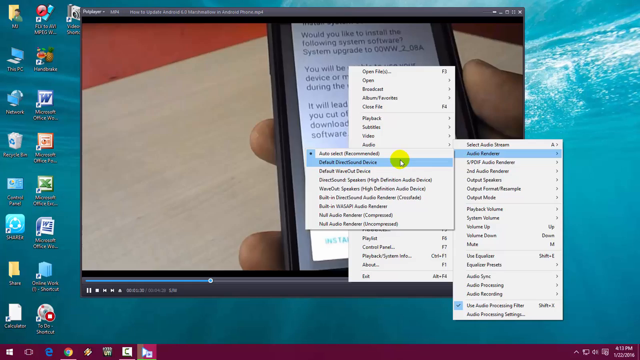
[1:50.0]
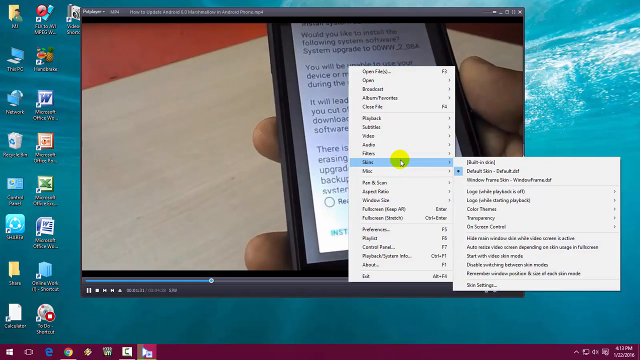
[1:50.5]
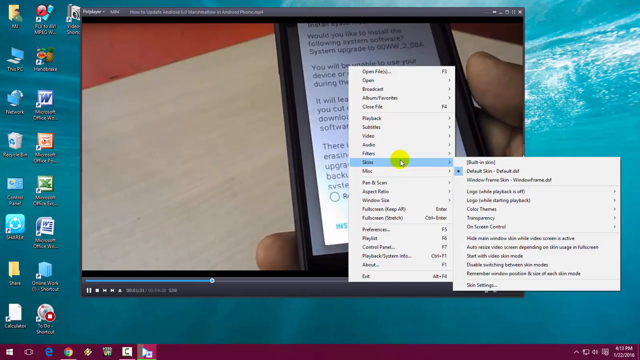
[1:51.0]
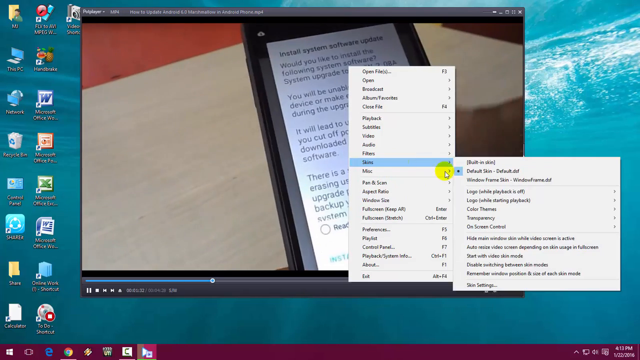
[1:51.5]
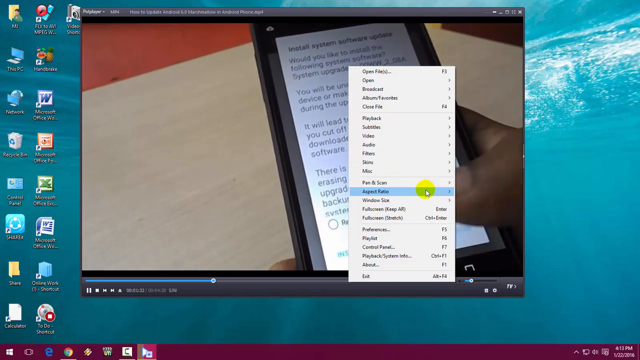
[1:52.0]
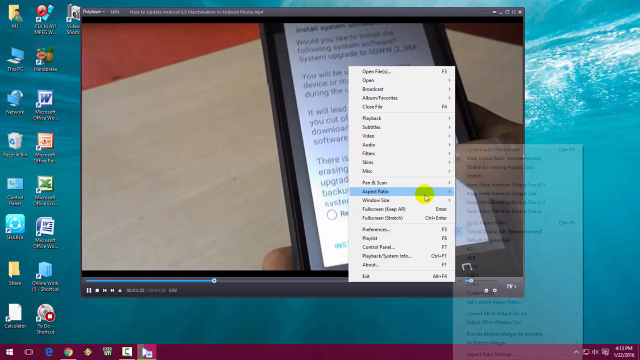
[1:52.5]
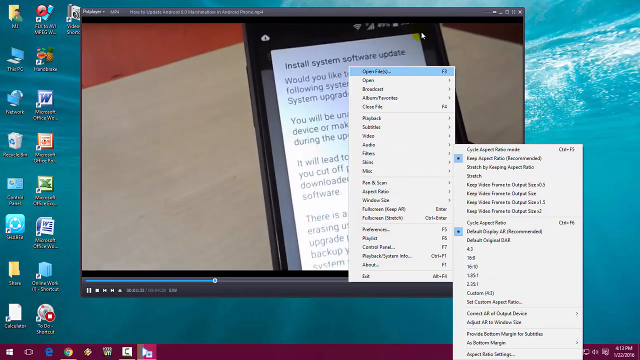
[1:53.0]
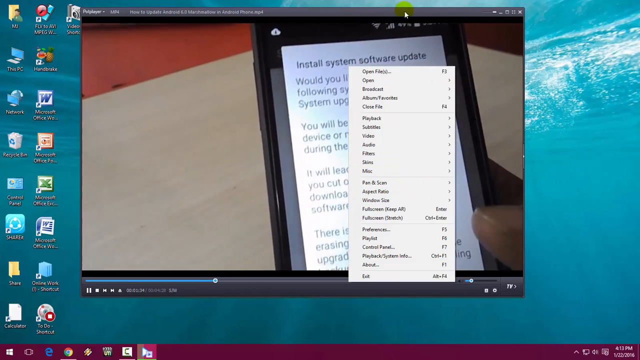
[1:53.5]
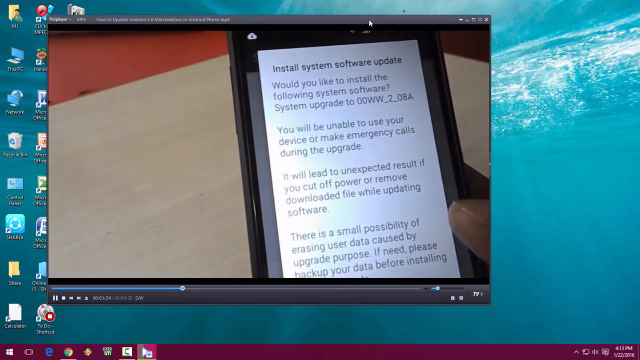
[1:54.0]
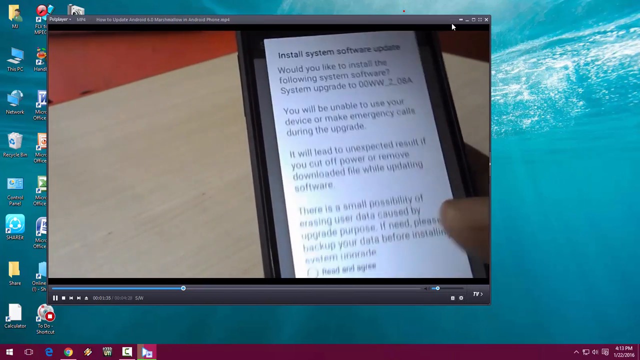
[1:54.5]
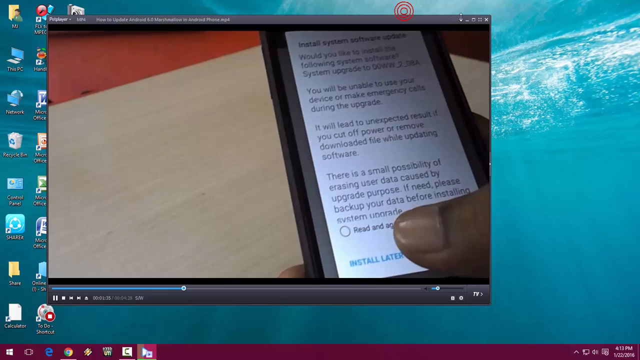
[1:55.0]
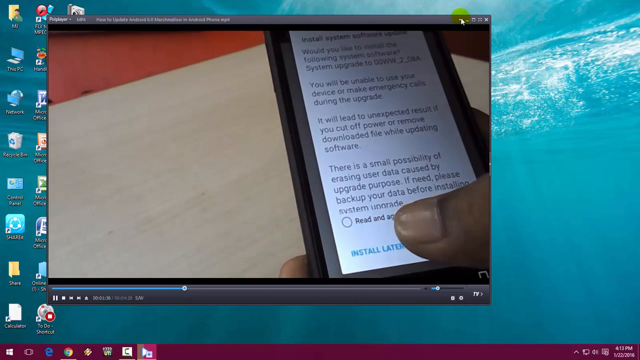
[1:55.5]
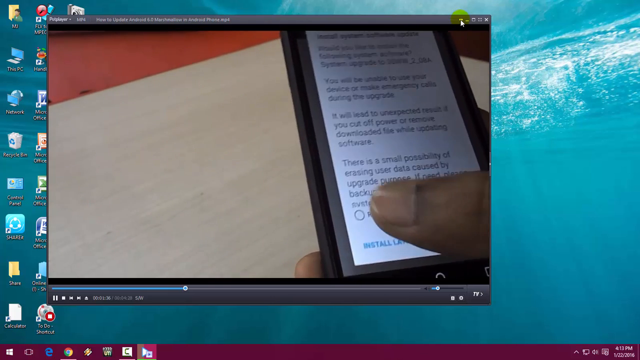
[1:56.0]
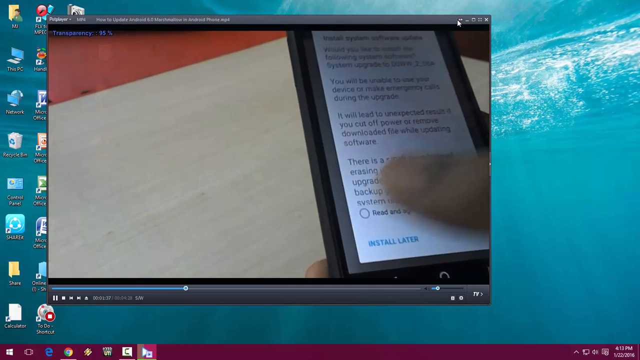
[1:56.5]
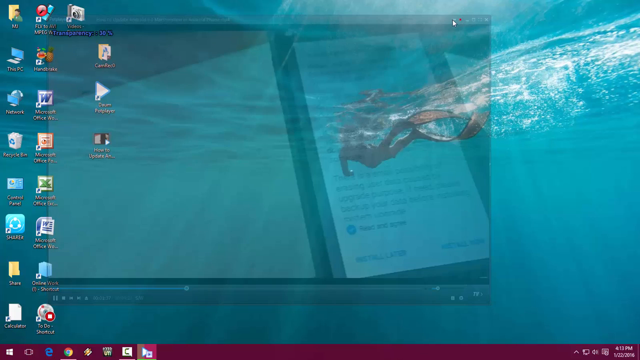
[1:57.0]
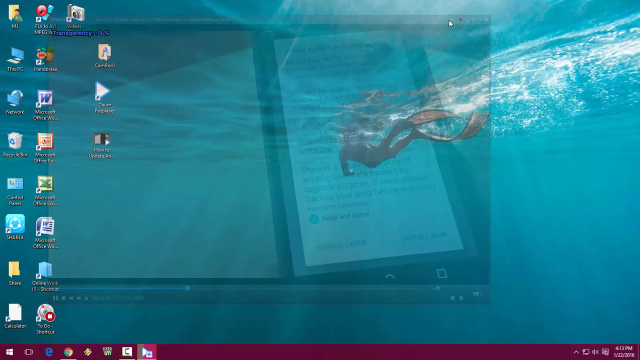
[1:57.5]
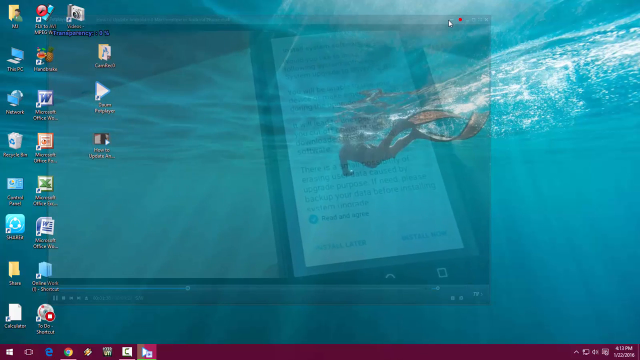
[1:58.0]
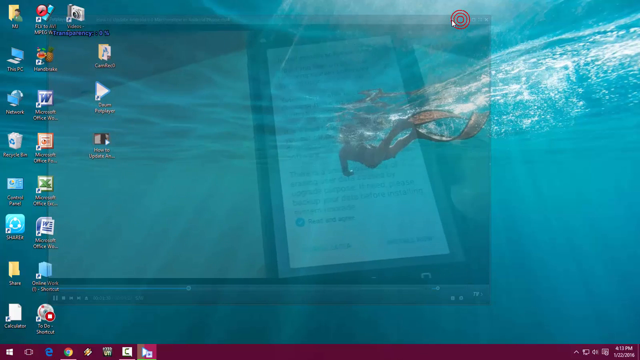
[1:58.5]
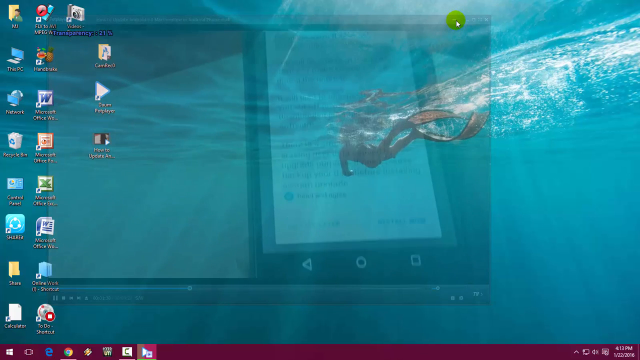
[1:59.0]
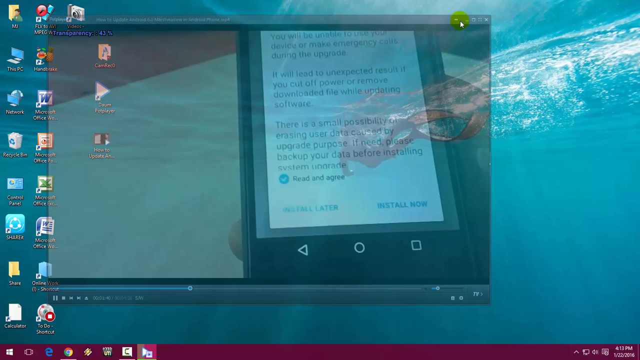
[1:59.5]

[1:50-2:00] A video plays in the PotPlayer video player, where someone appears to be holding a smartphone and going through some of its settings. A large menu is over the video, with the mouse hovering over the "skins" item, which has opened a submenu on the right where the default skin option "Default.dd" is selected. The mouse then goes down to the "Aspect Ratio" option on the larger menu, showing a submenu on the right with "Keep Aspect Ratio" and "Default Display AR" selected. The top part of the video player is clicked to close the menu, and the window is kind of dragged slightly to the left. In the playing video, a close-up of a smartphone shows an installation confirmation message, and a finger taps a circular radio button, indicating the terms have been read and agreed to. The video then slowly fades out of view, revealing a desktop screen with a background of a person snorkeling in the ocean and the desktop icons on the left, and then slowly fades back into view.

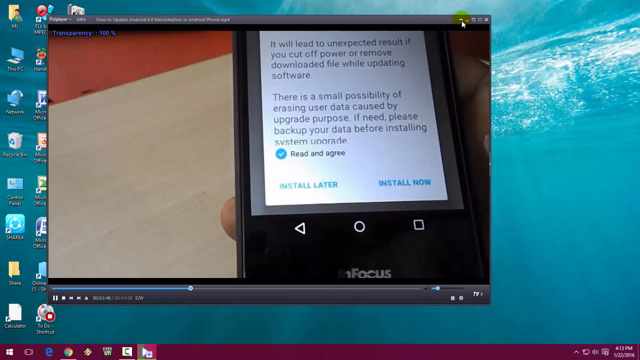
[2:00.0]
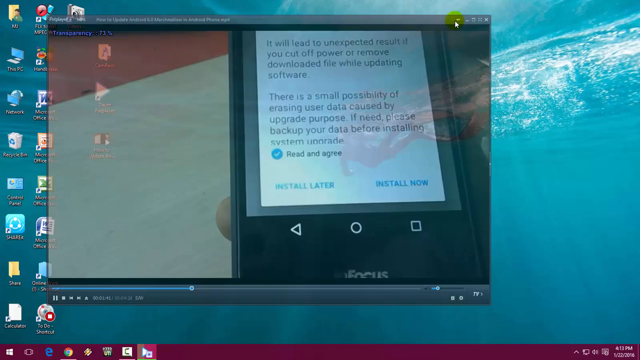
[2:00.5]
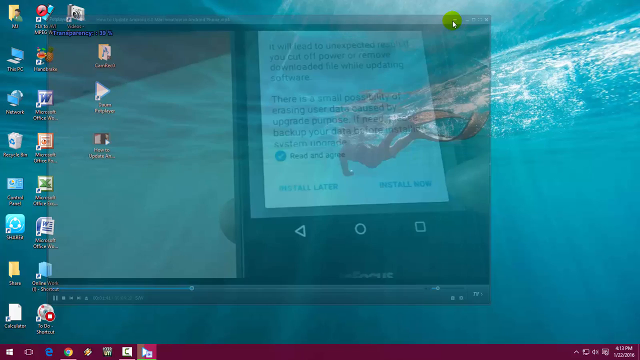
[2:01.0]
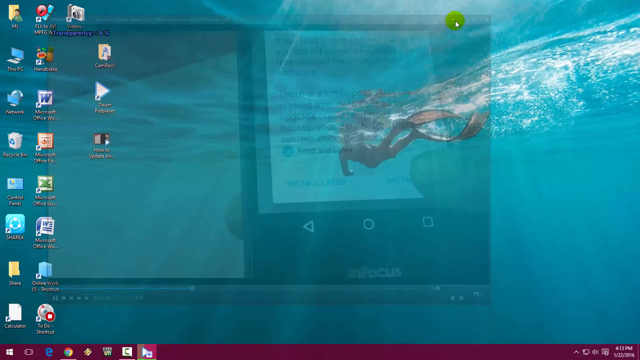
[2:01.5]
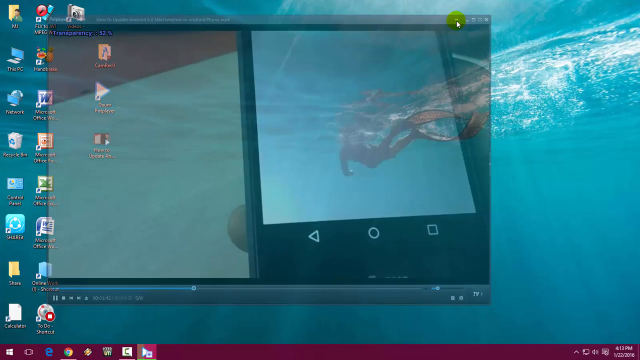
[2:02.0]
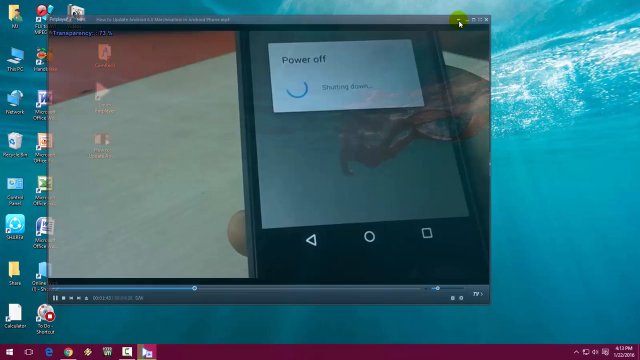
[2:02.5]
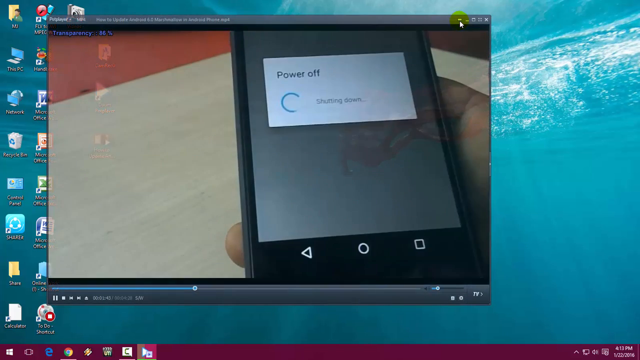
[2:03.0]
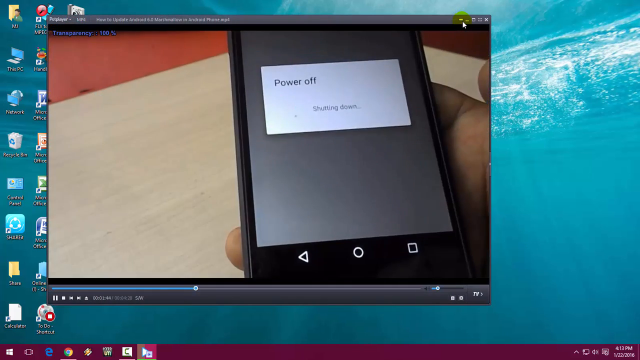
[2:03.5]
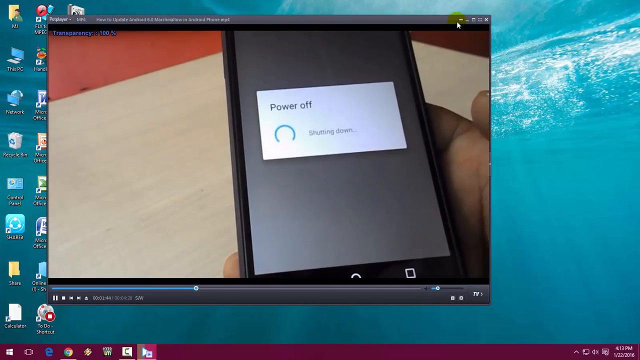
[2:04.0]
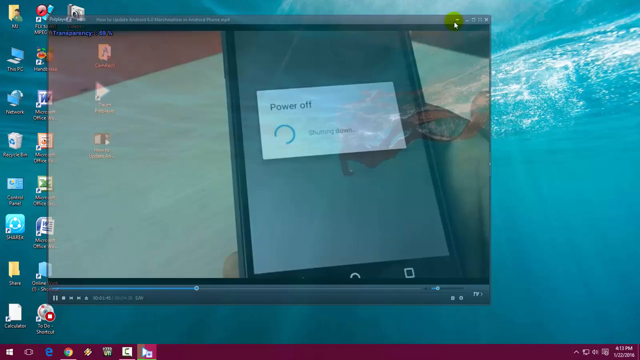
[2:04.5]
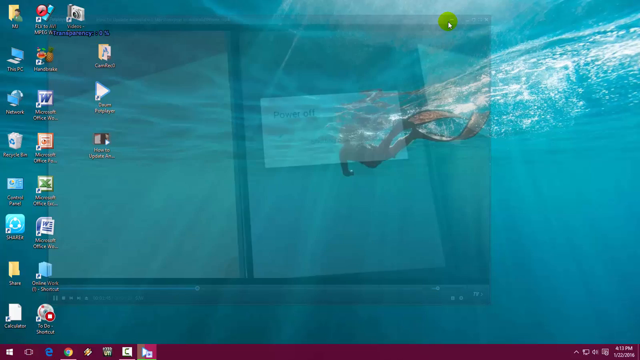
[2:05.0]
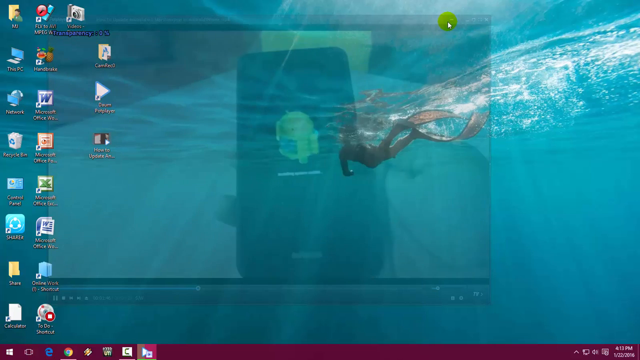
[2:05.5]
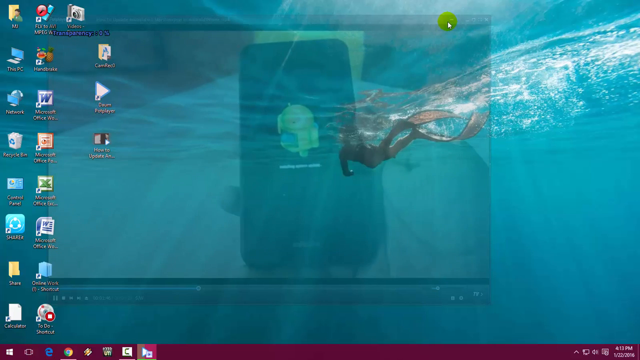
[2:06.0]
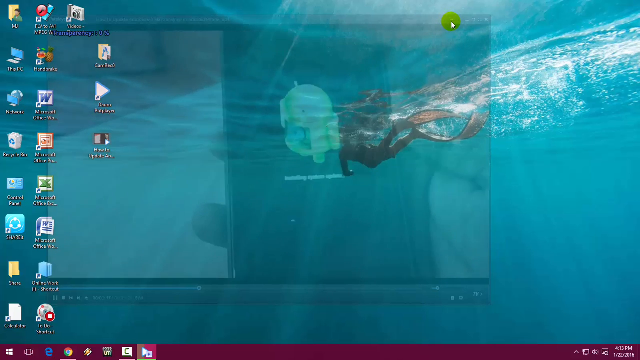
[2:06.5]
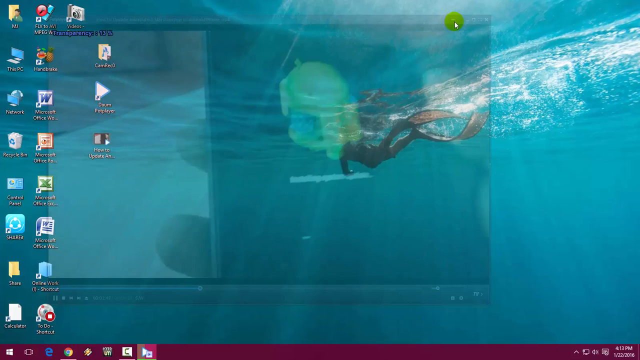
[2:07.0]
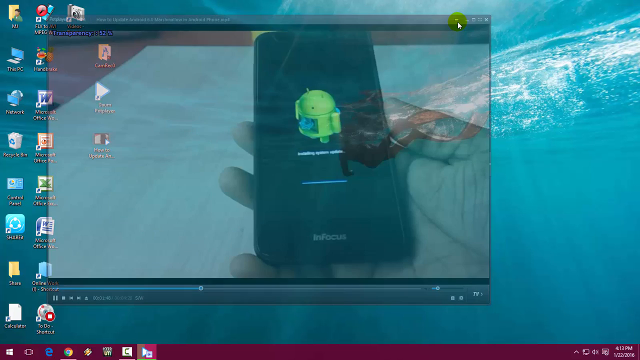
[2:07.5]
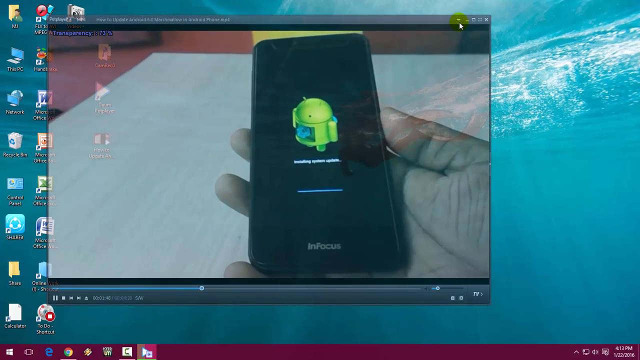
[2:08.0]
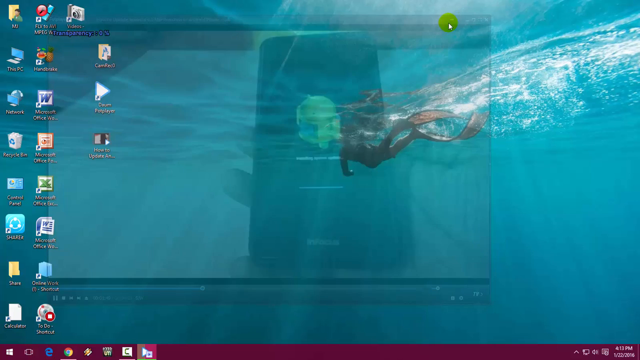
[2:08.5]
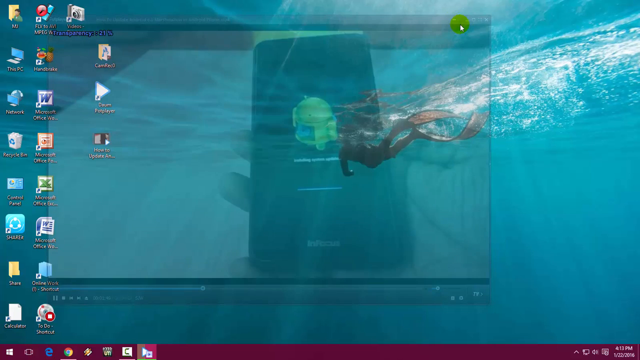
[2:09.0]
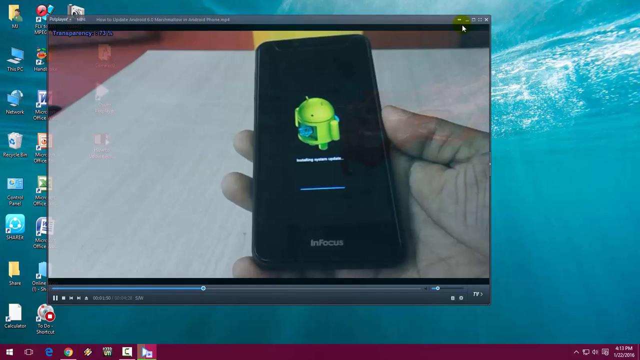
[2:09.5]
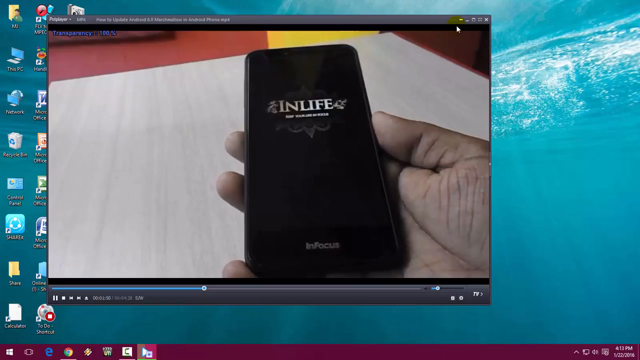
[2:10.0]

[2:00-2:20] A video plays in the PotPlayer video player, showing a close-up of someone looking at the screen of an in-focus smartphone. On the phone screen, a white pop-up box seems to be a confirmation message to install a system upgrade, with a radio button labeled "read and agree" that has been checked. At the bottom are an "install later" button and an "install now" button, and the person's finger taps install now, bringing up a pop-up that says "power off", "shutting down" with a circular progress icon. While the video plays, it fades in and out of view: it is clear, then fades until it is almost transparent and the desktop background shows, then fades back to clear, then fades out again. The phone shuts off to perform the update; the screen goes black with just the Android alien icon and the message "initializing system update". The phone then goes to a black screen with the text "inlife" in yellow. The whole video then goes to a black screen and stays that way for a few seconds.